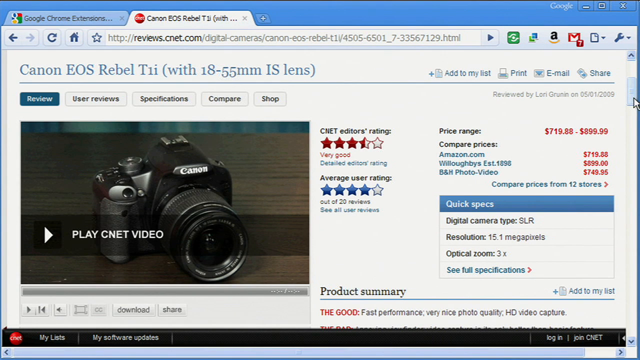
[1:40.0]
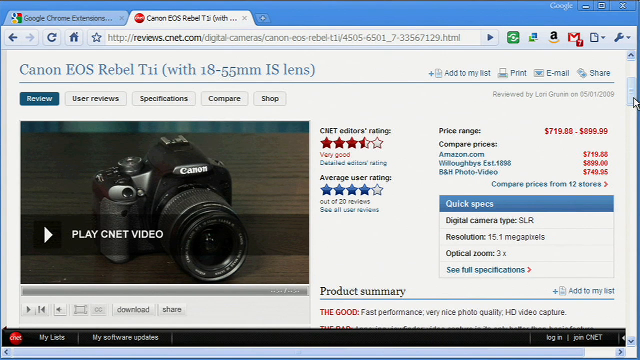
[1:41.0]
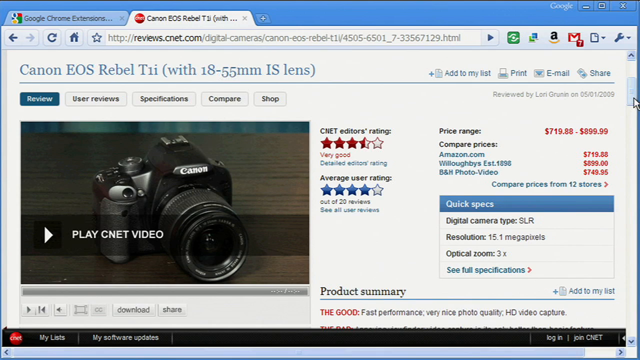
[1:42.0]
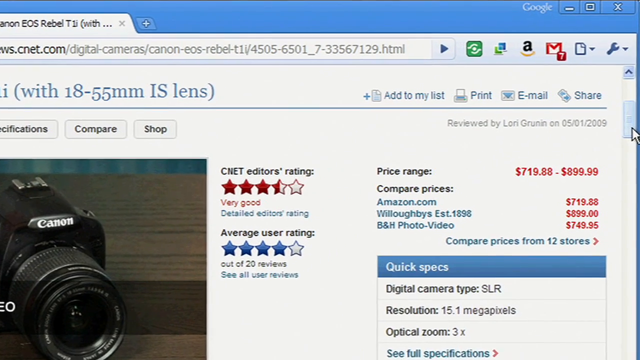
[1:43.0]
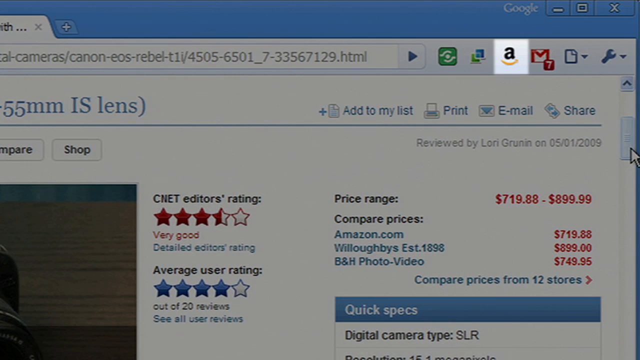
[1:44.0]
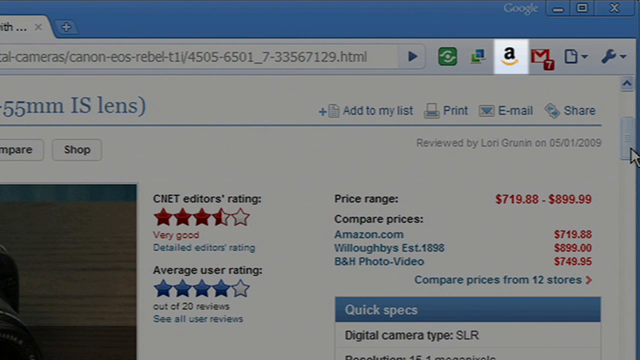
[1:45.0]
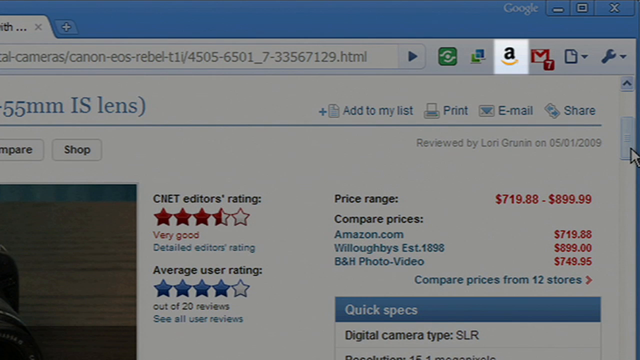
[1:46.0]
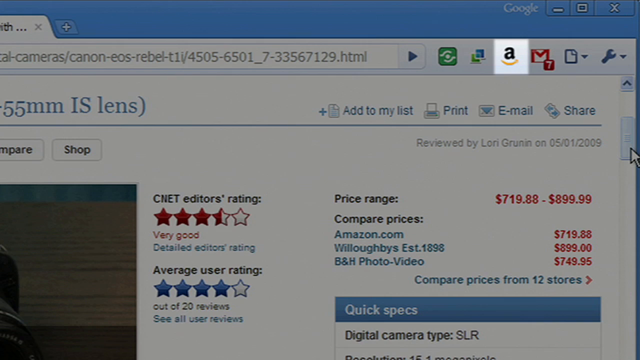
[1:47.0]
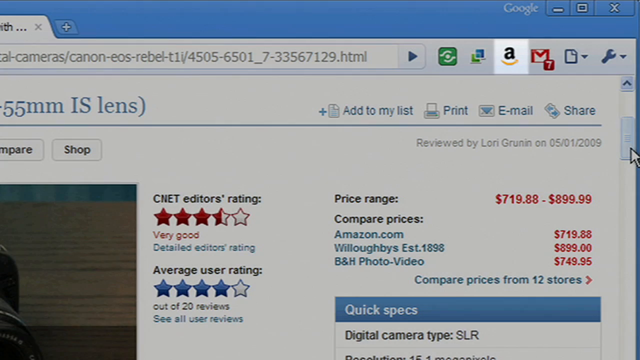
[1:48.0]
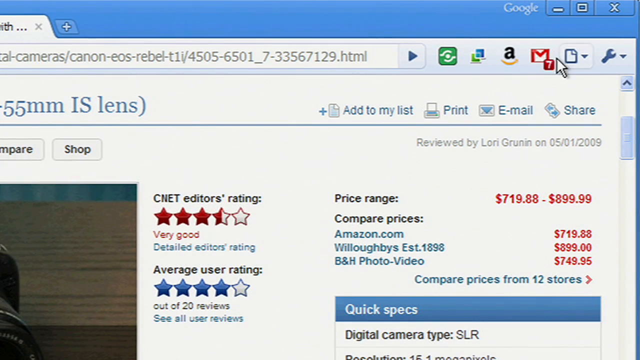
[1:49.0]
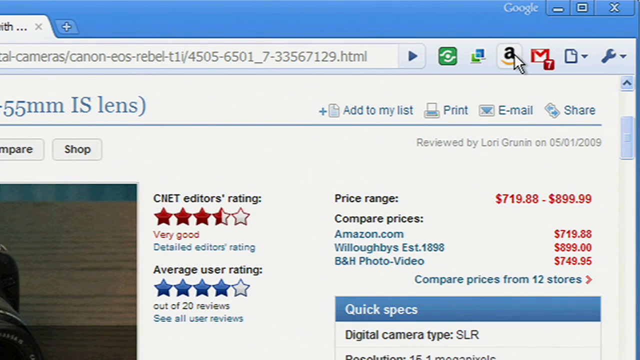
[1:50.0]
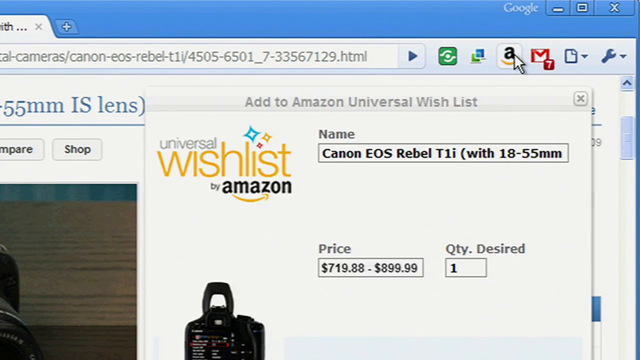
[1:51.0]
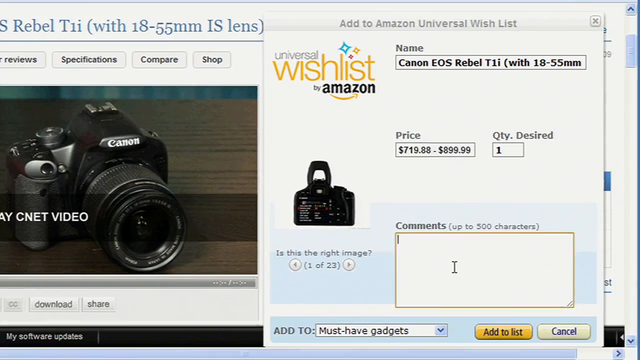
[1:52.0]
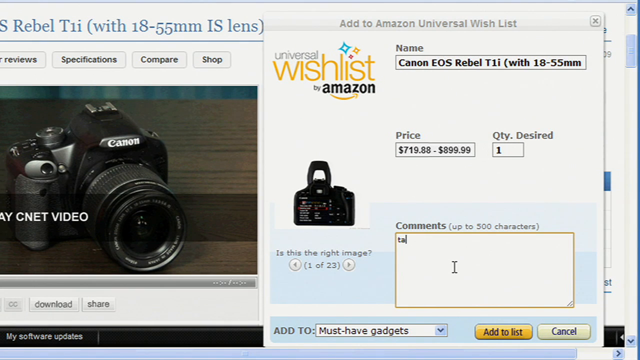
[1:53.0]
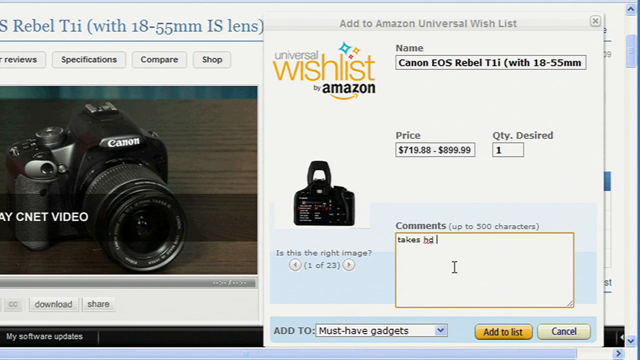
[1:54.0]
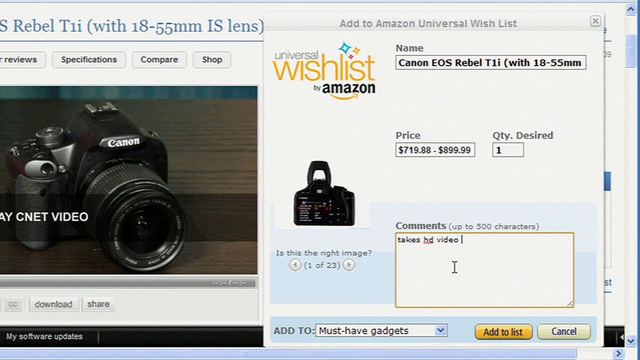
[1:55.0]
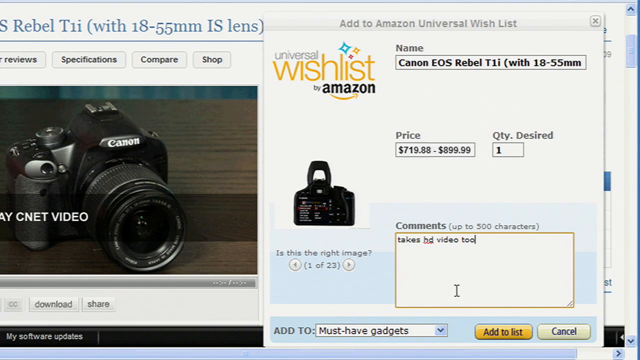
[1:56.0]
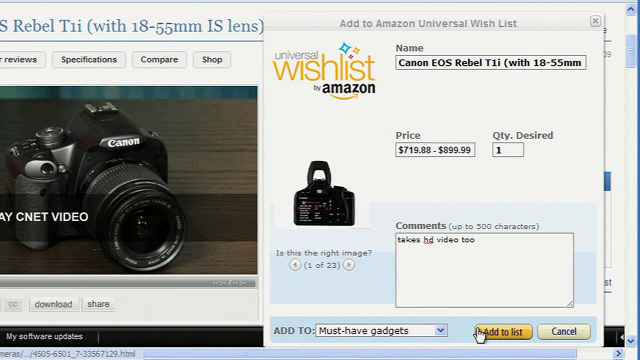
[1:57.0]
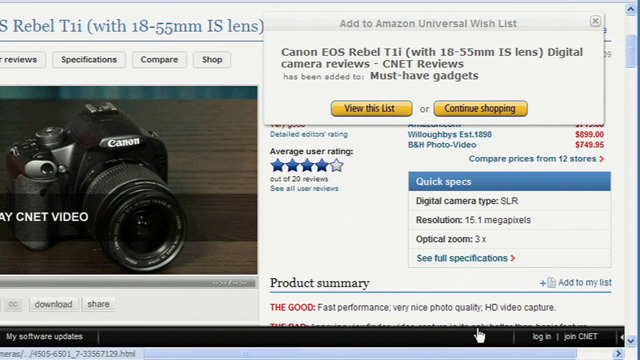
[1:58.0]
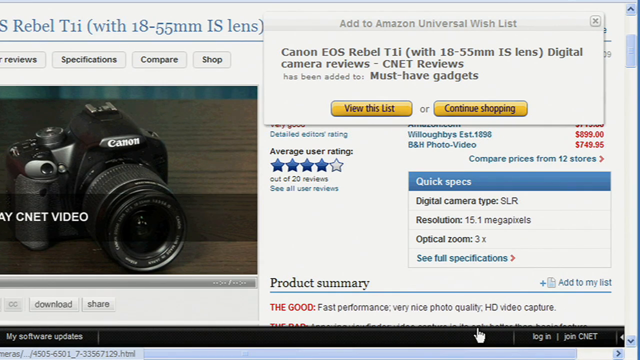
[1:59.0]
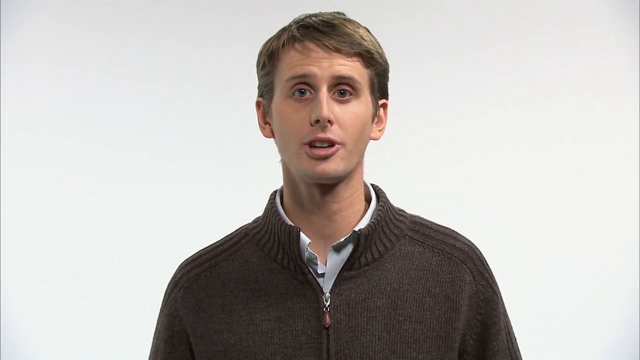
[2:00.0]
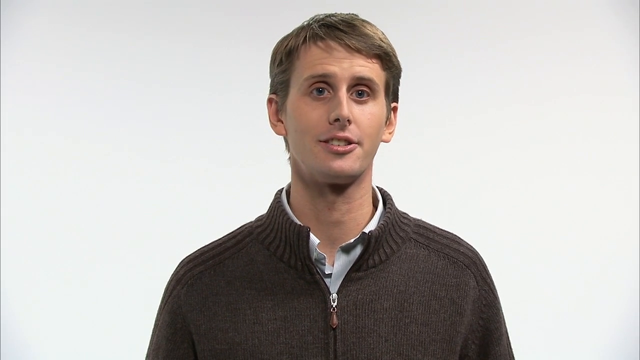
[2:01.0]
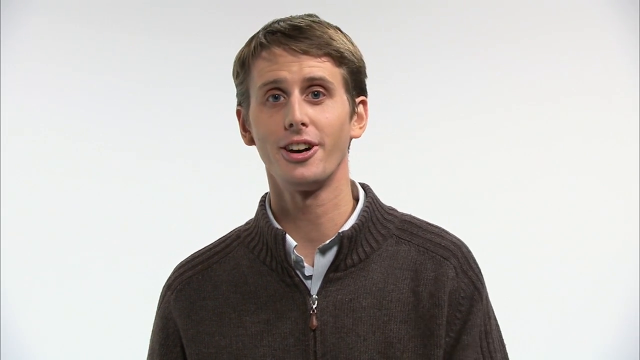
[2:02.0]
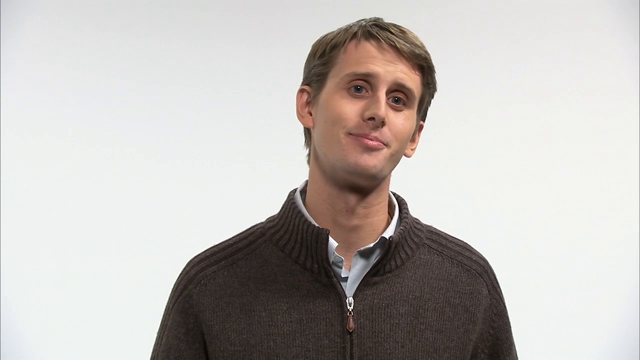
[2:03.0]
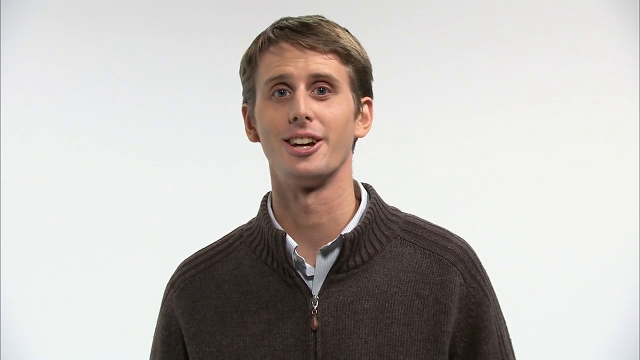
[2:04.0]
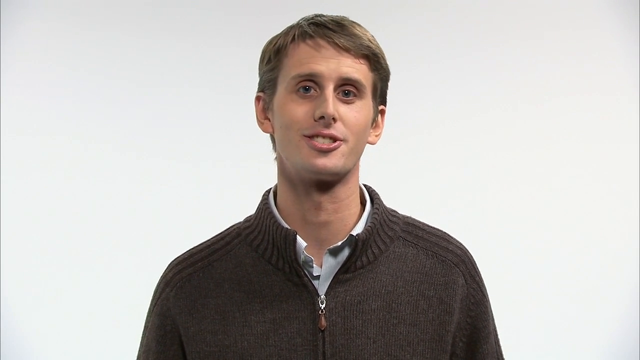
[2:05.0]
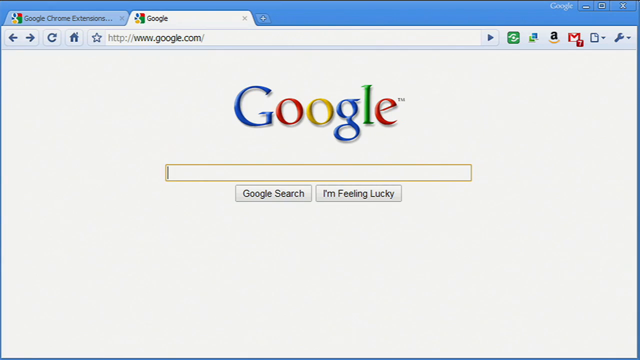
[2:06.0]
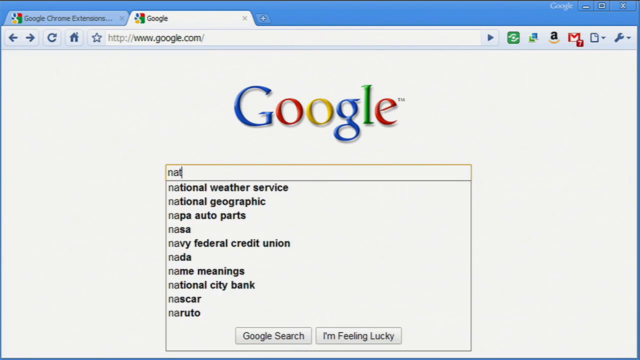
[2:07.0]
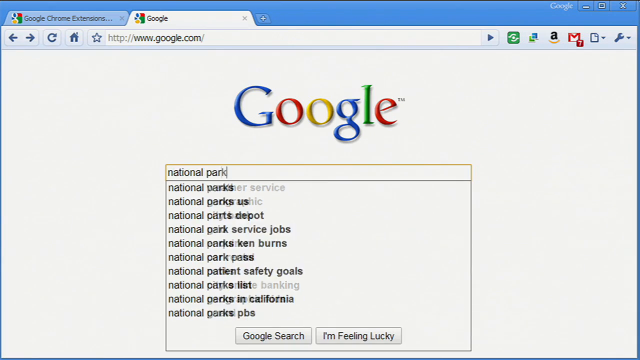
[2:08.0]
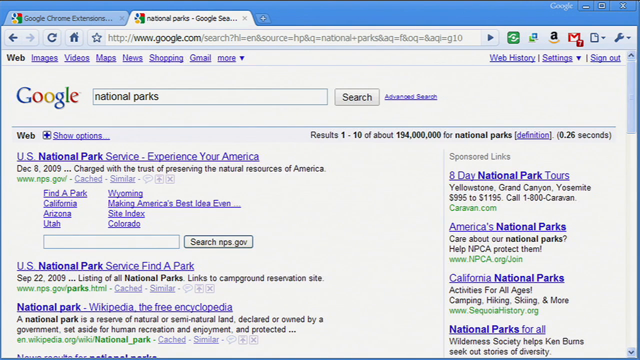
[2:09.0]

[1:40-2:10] A CNET web page review section shows the Canon EOS Rebel T1i, with reviews and pricing for the camera. The view zooms in on an extension icon in the upper right corner of the screen, an Amazon icon; the rest of the screen goes black and the Amazon icon is highlighted. The mouse cursor goes over to the icon and clicks it, and the extension appears, allowing the item to be put on an Amazon wishlist. The name, price, and quantity are already filled in. The person clicks into a small box for comments at the bottom, types "takes HD video to", and clicks out of it. A man then talks to the screen for a while, smiling a lot and moving back and forth as he talks. The video then changes to google.com, where someone searches for national parks. The search results appear: the first is "U.S. National Park Service, experience your America" and the second is "U.S. National Park Service, find the park."